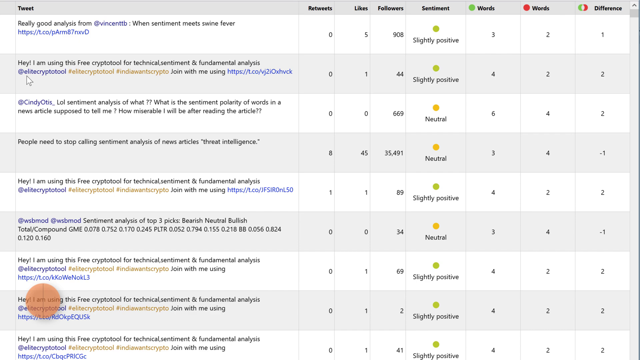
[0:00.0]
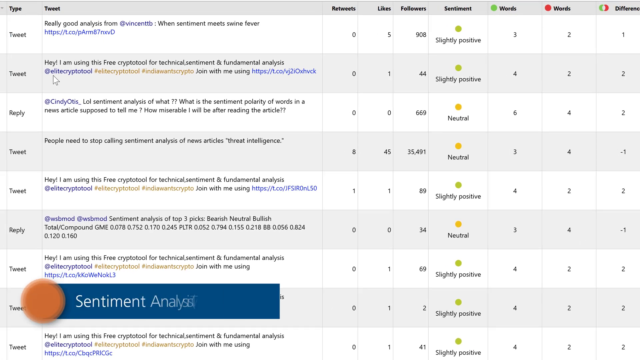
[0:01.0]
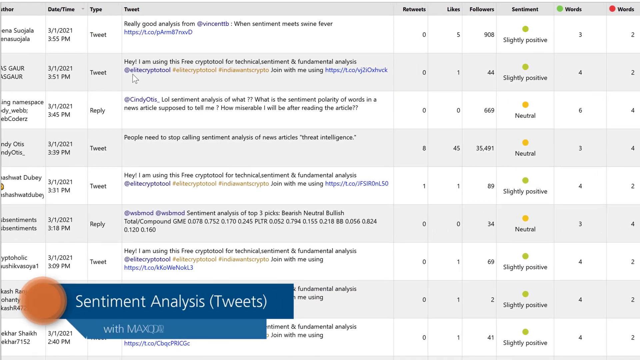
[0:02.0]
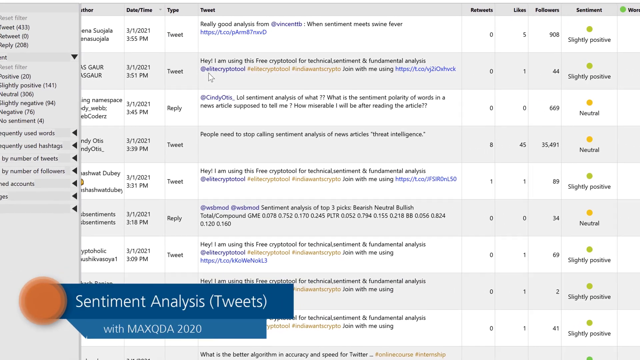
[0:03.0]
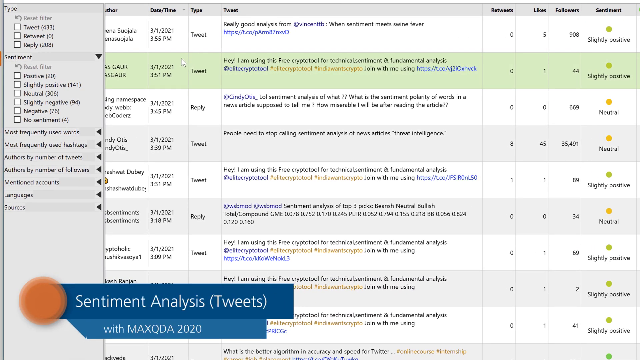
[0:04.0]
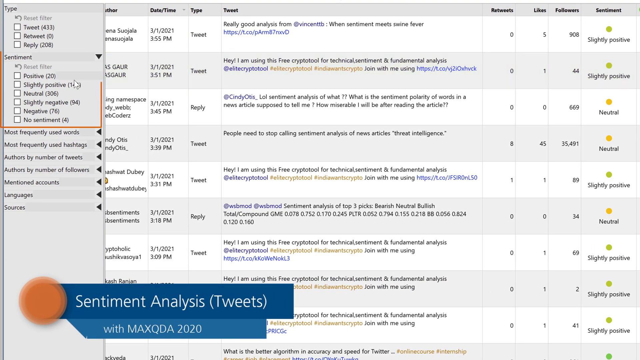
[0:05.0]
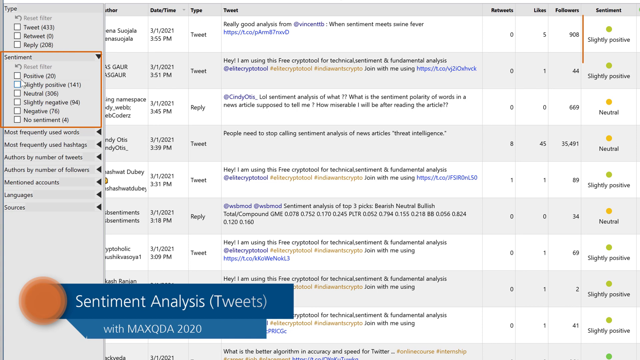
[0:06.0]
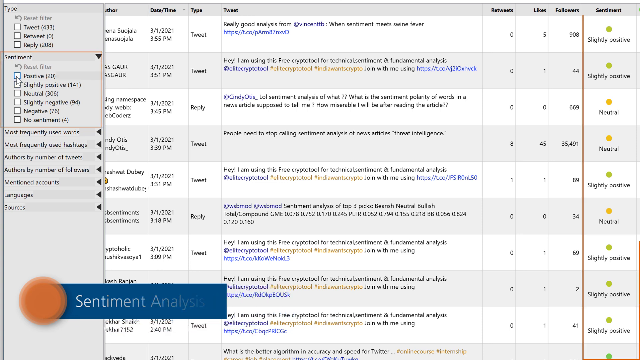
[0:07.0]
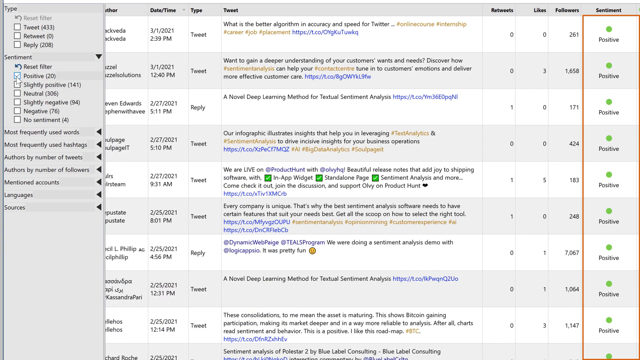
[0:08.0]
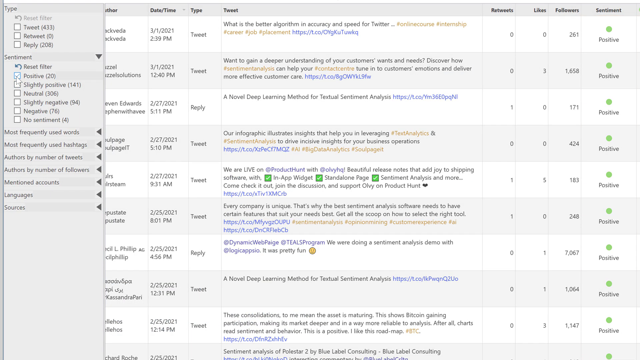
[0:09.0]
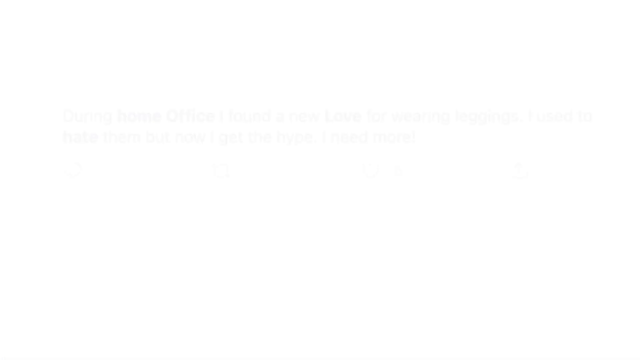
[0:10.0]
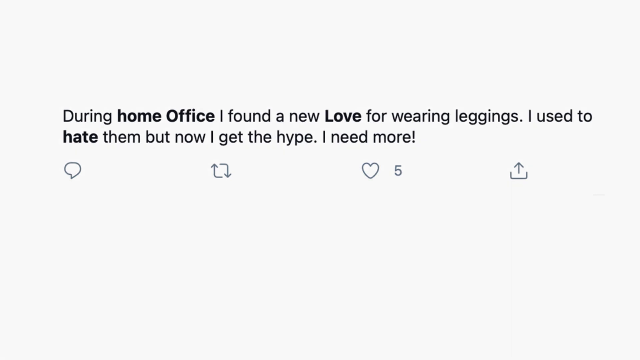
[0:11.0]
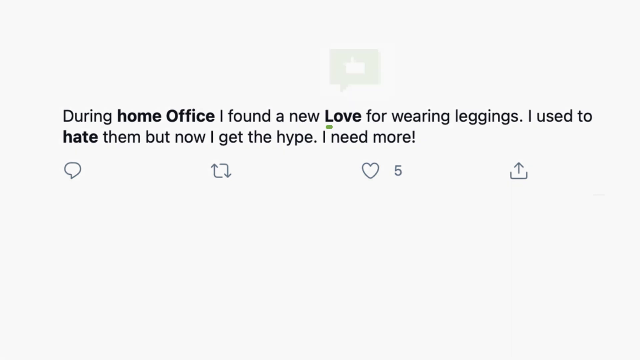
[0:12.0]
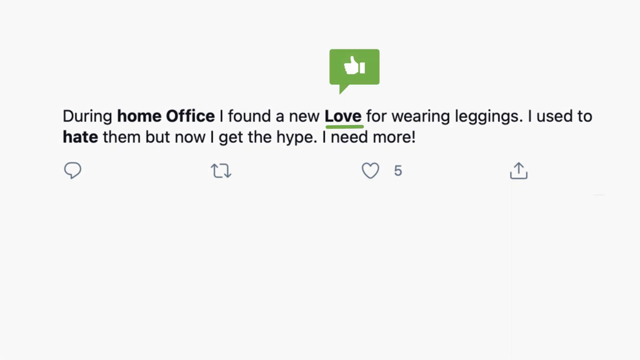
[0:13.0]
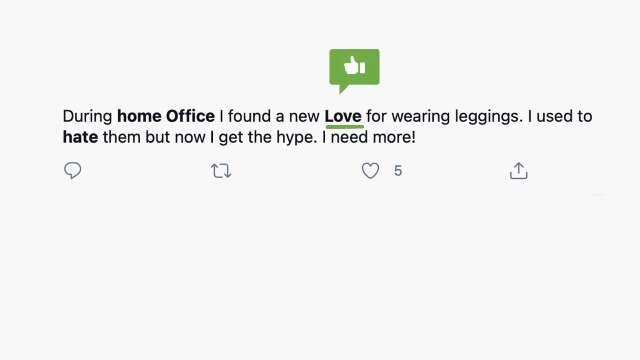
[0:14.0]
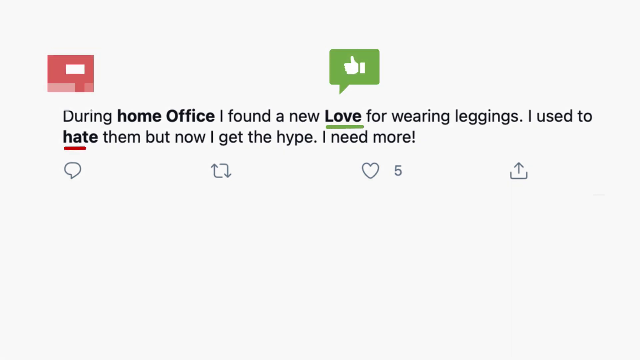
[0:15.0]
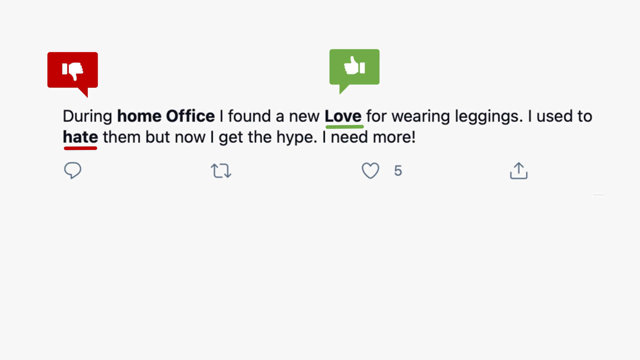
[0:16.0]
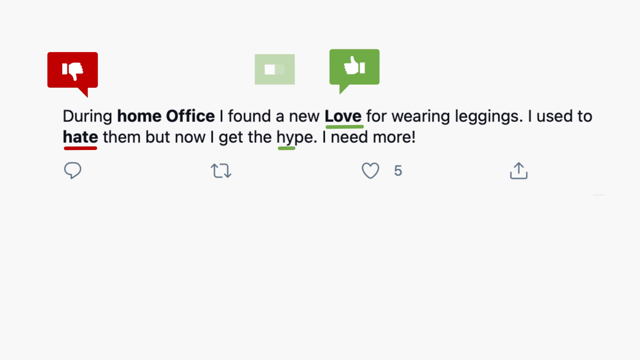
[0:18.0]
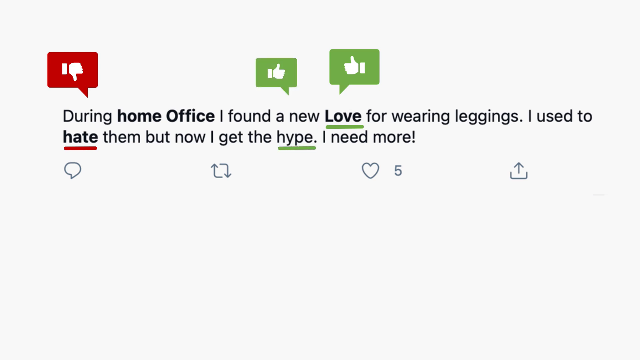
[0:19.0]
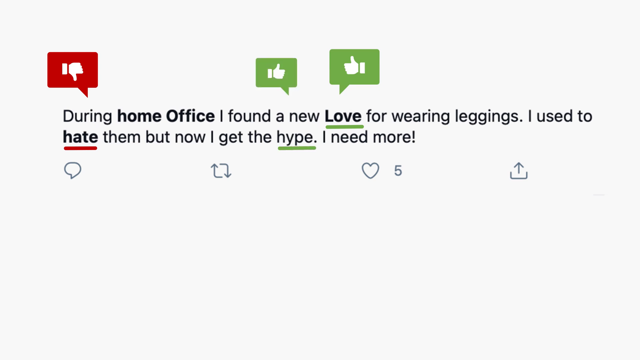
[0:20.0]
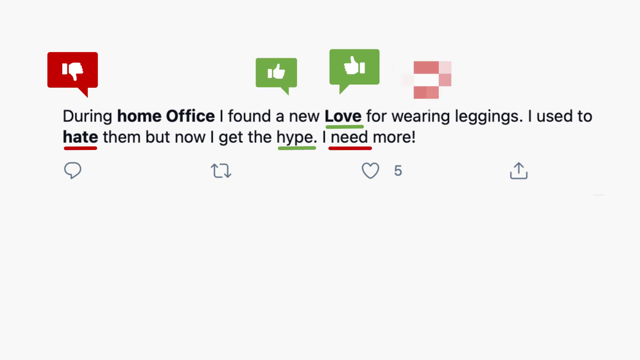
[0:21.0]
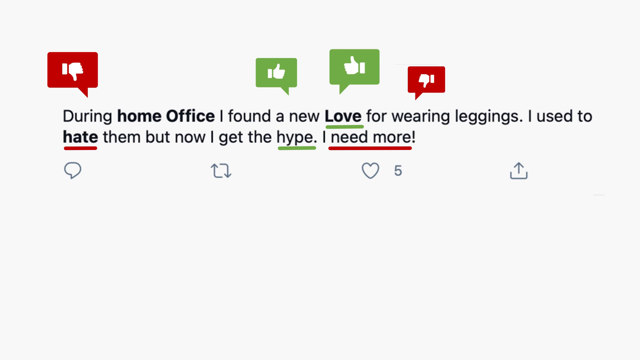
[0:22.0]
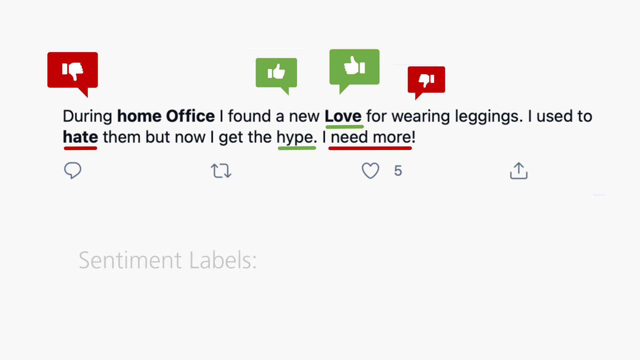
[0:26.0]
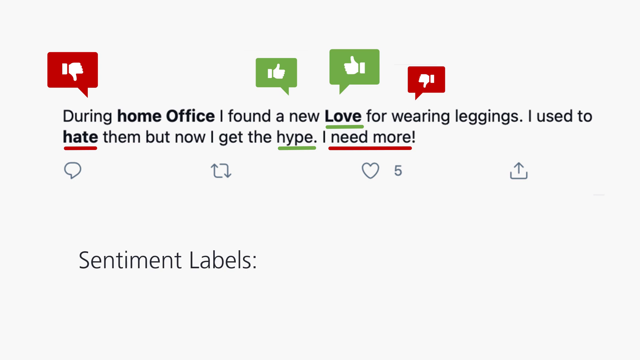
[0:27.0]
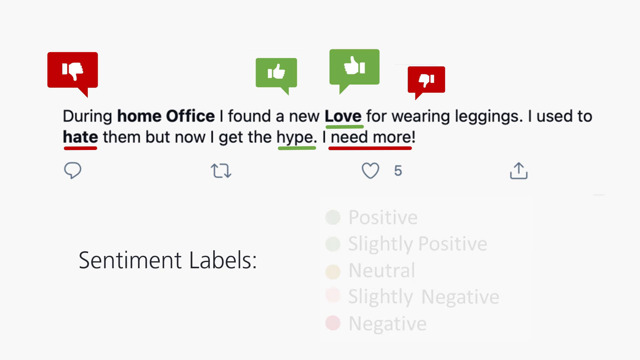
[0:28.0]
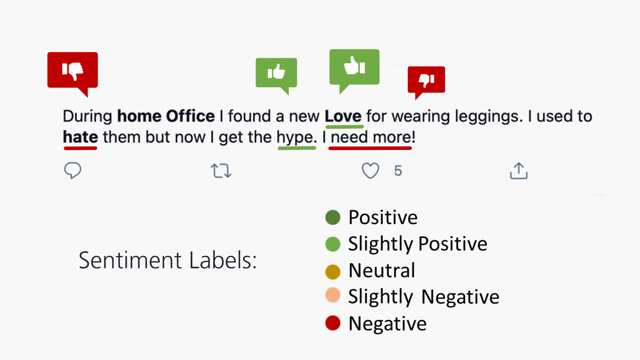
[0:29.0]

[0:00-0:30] A screenshot of a computer screen or database shows a dashboard of some sort with multiple columns. A filter column is open at the top, listing "type, tweet, retweet, reply, sentiment, positive, slightly positive, neutral, slightly negative, no sentiment," followed by columns for most frequently used words, most frequently used hashtags, author by number of tweets, authors by number of followers, mentioned accounts, languages, and sources. In the center are filled-in columns of text. The screen wipes to individual tweets, one reading "during home office, I found a new love for wearing leggings. I used to hate them, but now I get the hype, I need more." The word "love" is underlined in green with a check mark graphic over it, "hate" is underlined in red with a red thumbs-down symbol, "hype" is underlined in green with a thumbs-up, and "need more" has a thumbs-down. The screen then wipes to a key that says "sentiment labels."